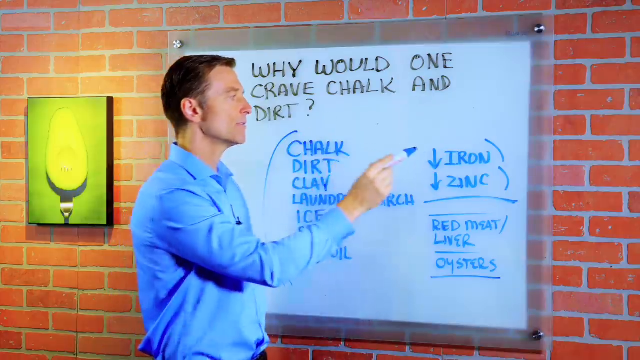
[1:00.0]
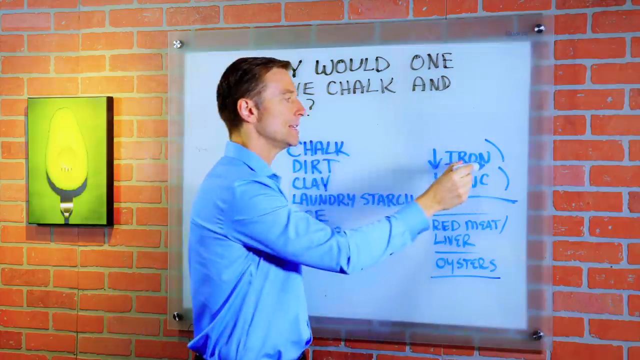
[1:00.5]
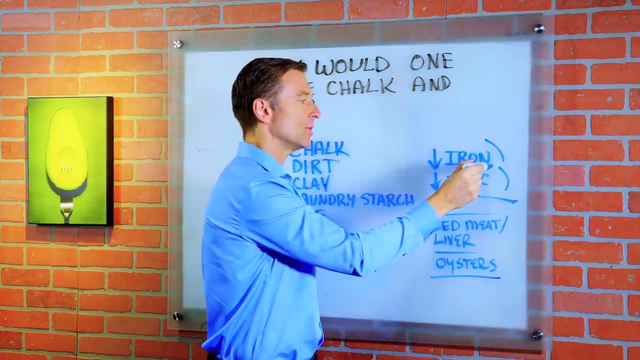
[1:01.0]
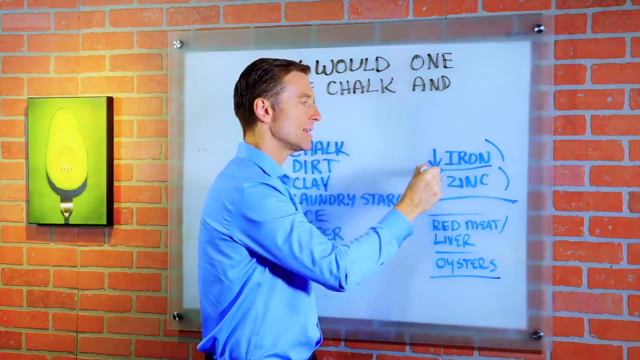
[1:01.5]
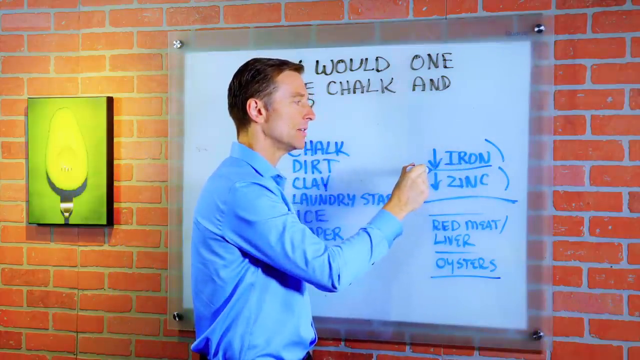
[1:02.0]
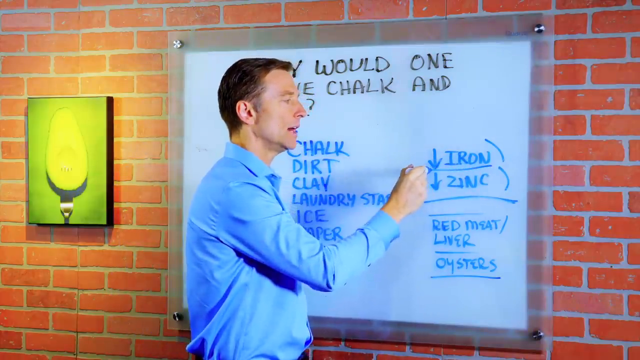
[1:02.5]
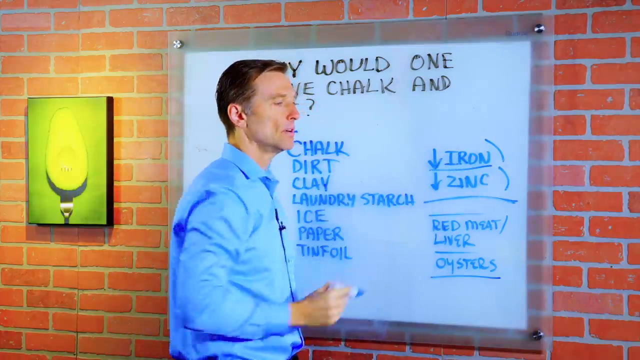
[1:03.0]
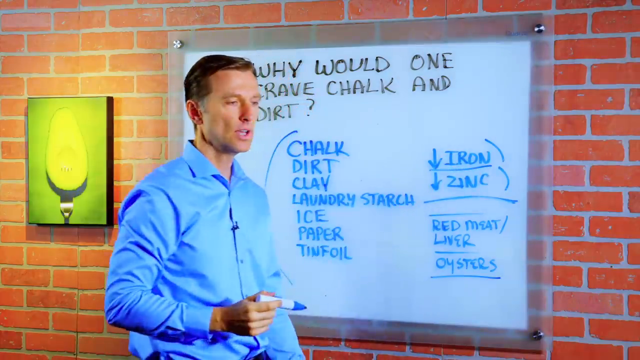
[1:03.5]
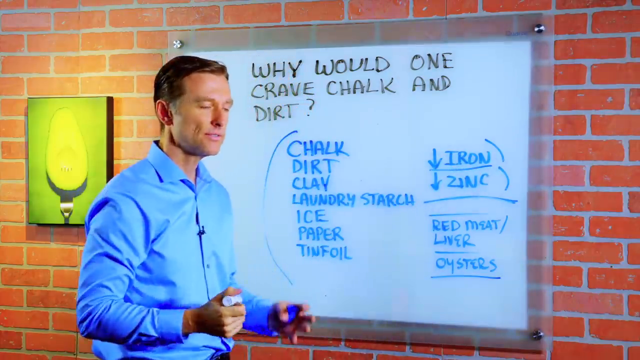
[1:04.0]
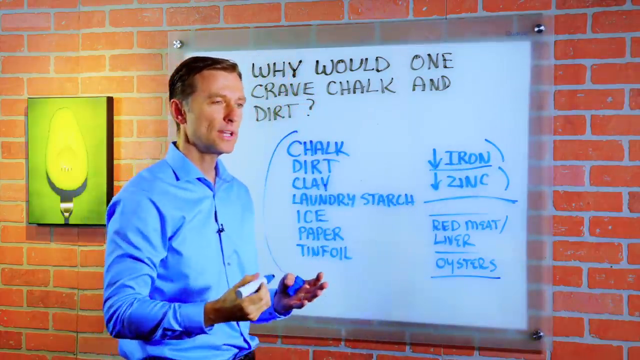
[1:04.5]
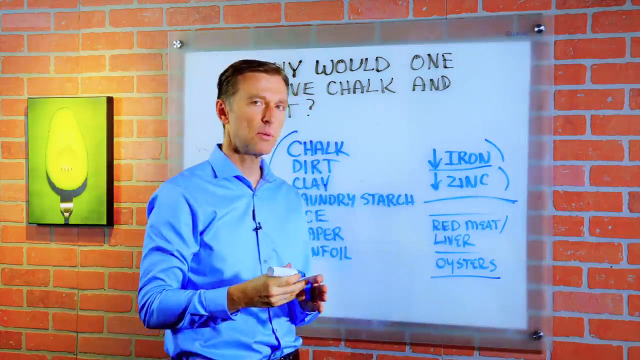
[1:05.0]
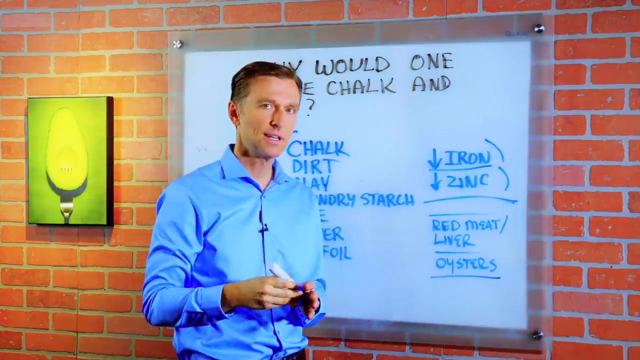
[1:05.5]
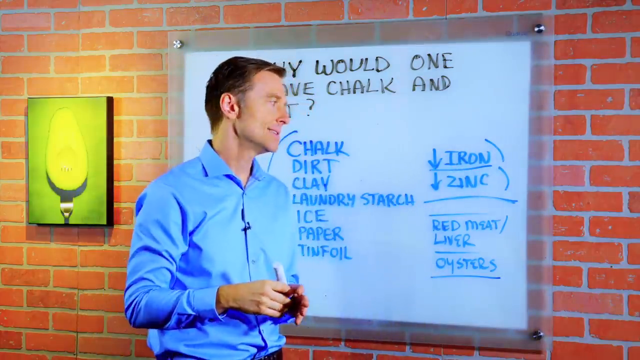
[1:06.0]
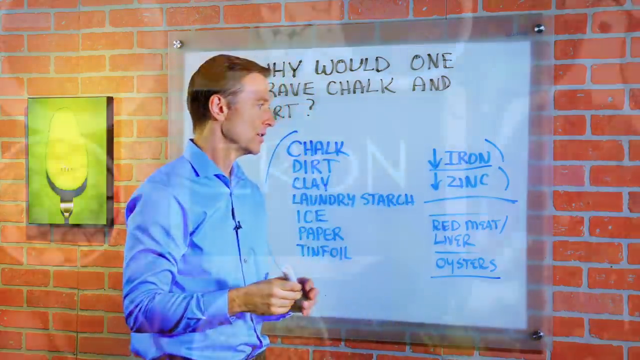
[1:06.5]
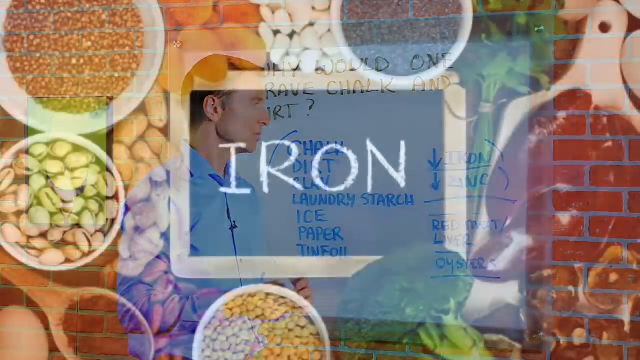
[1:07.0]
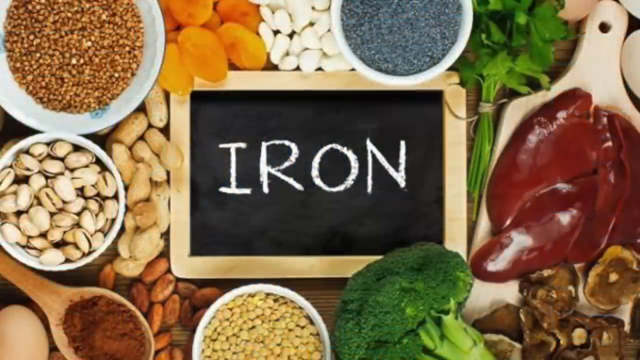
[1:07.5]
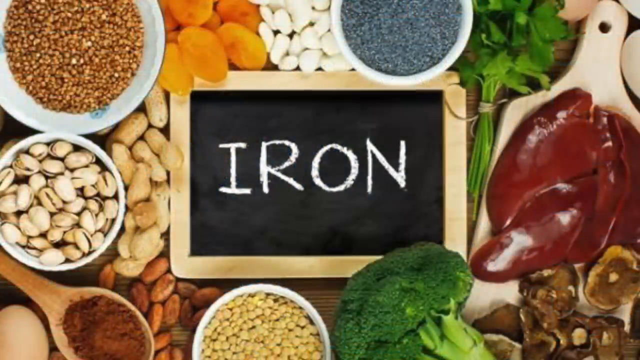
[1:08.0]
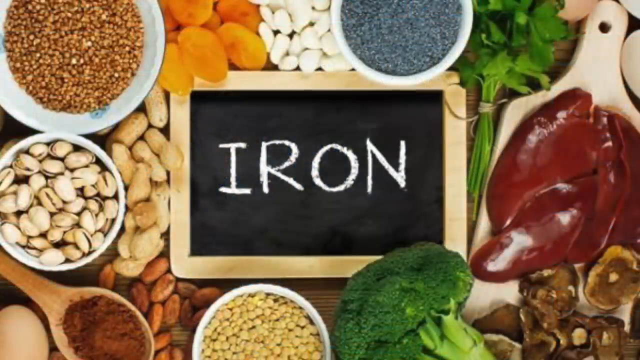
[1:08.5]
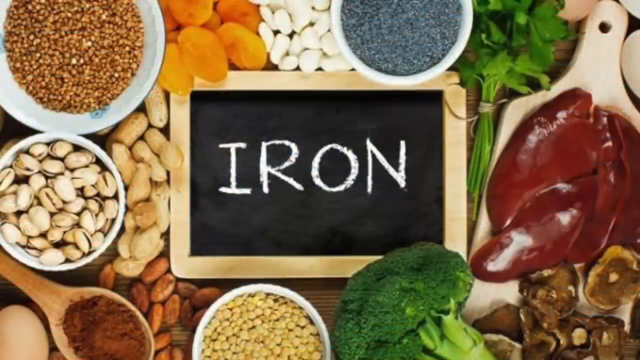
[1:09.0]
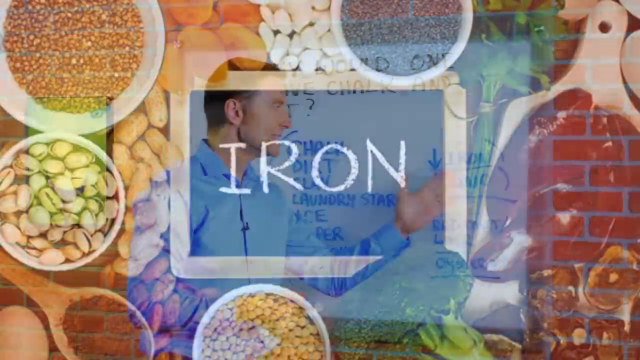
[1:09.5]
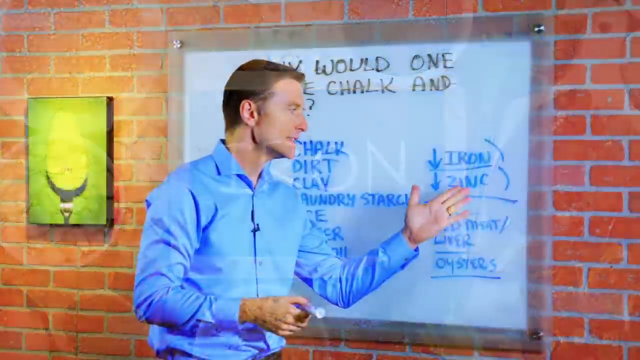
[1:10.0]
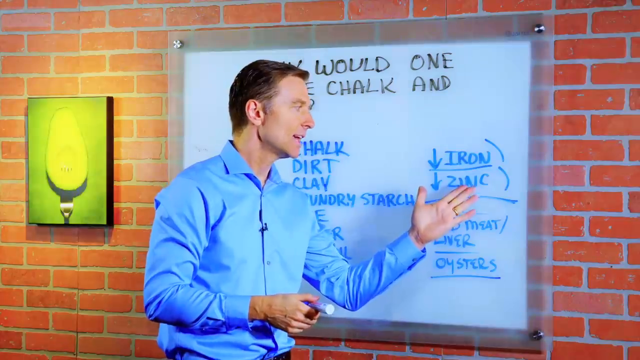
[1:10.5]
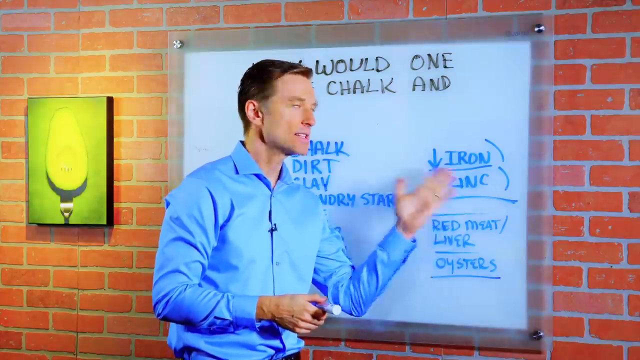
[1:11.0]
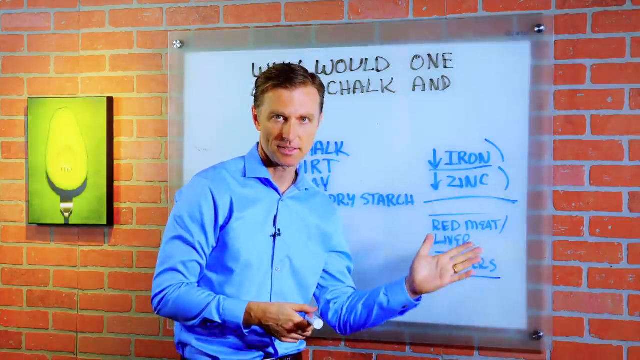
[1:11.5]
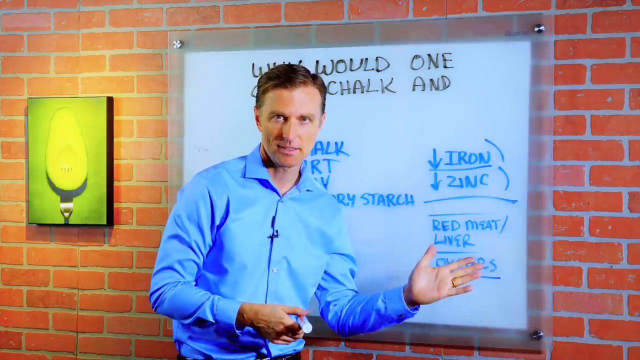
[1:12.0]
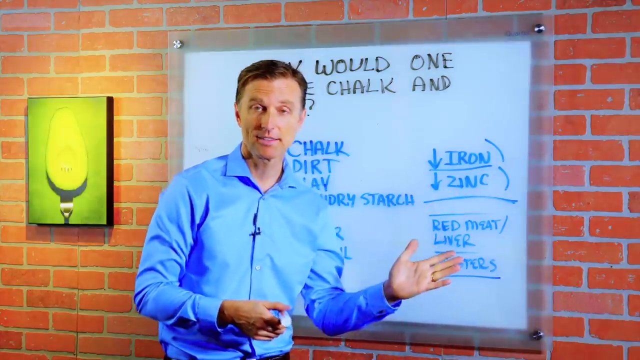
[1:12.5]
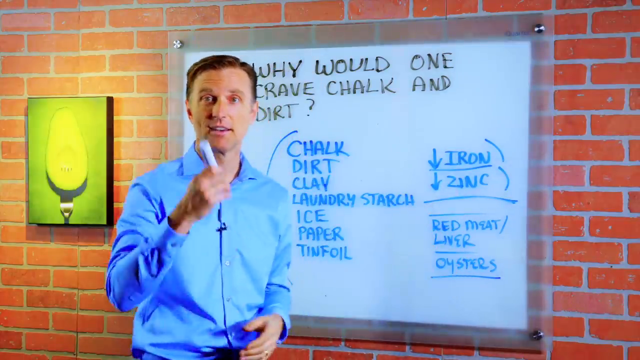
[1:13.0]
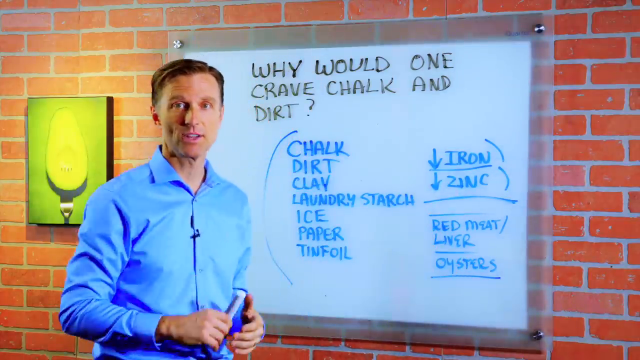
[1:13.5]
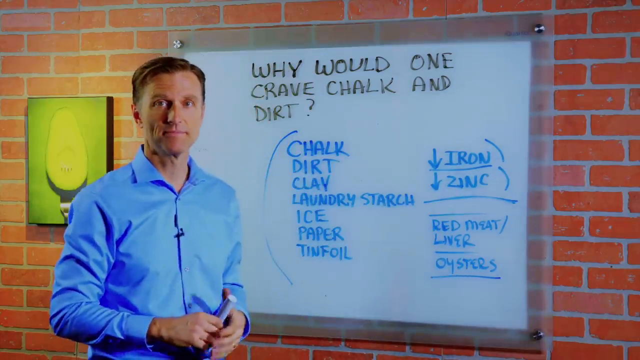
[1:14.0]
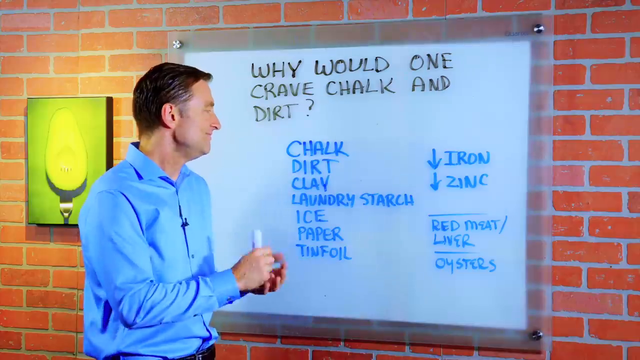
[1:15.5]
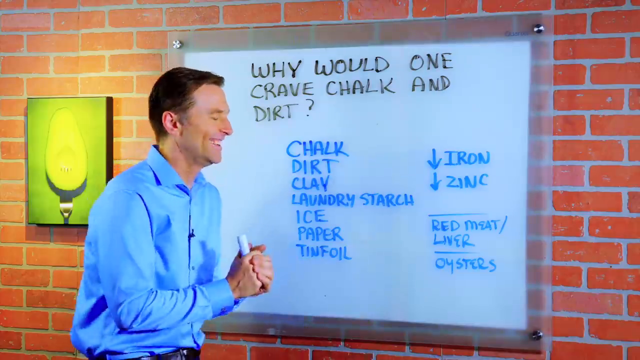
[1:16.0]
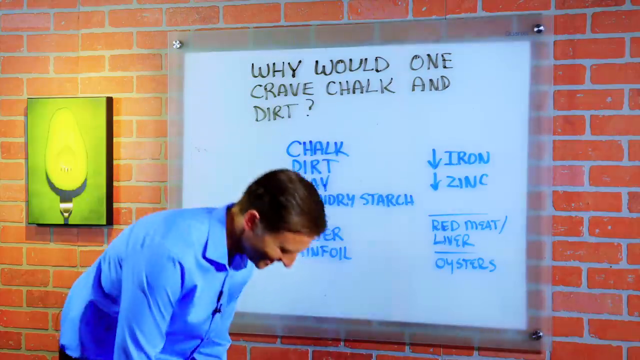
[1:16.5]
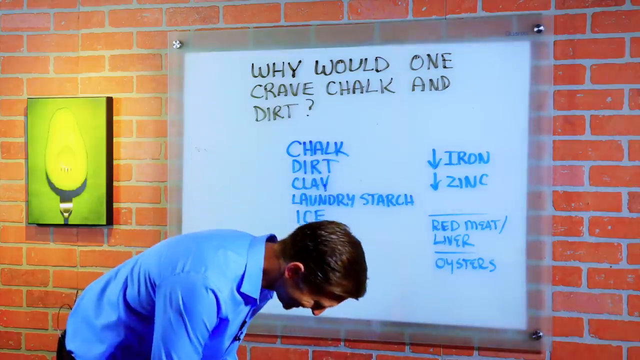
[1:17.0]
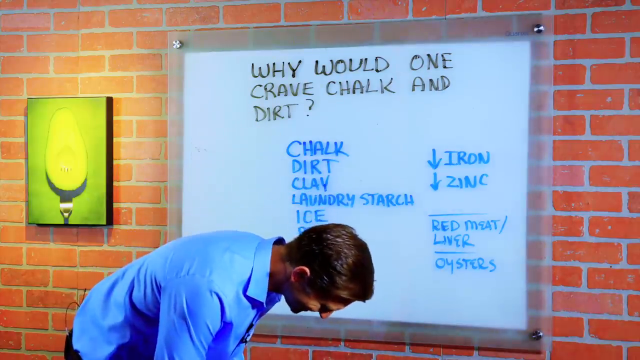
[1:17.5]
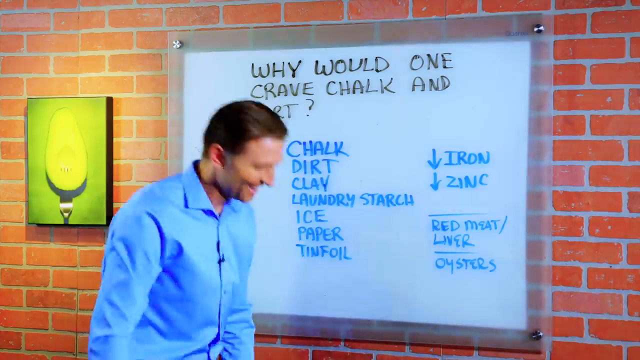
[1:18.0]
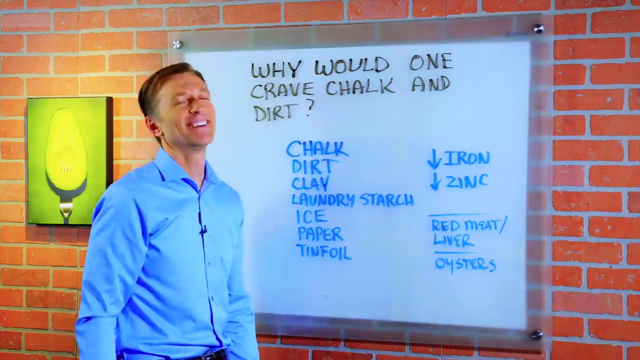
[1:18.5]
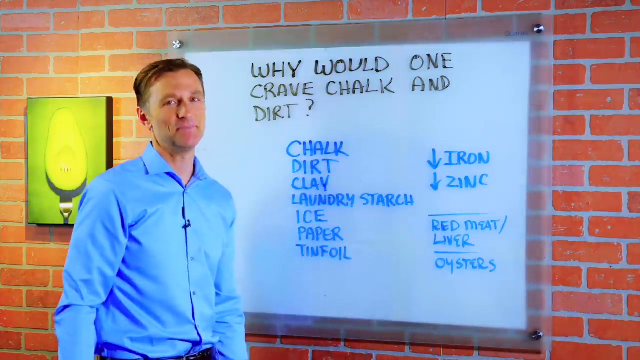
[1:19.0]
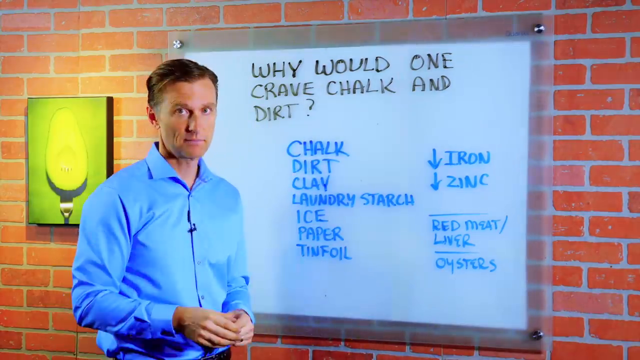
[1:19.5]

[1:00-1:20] A man in a blue collared shirt goes over different areas of the whiteboard, using a blue marker to make lines under some of the written words. He speaks and moves his hands, at times looking at the camera. The video then shows different types of food products: some nuts, leafy greens and broccoli surrounding a small black blackboard that says "iron". It returns to the man in the blue collared shirt, who speaks about something on the whiteboard and motions his hands to different areas. He points his marker at the screen, and the screen seems to turn black. Then the video goes back to the man, who appears to be laughing at something.